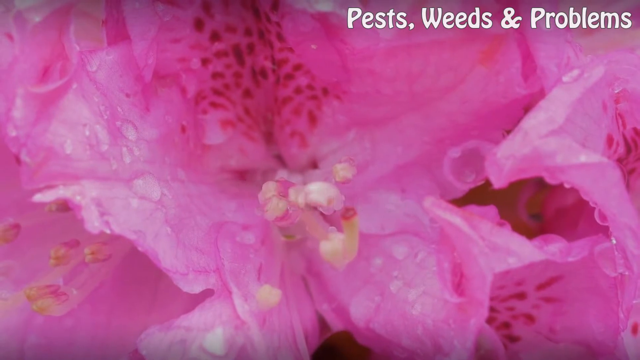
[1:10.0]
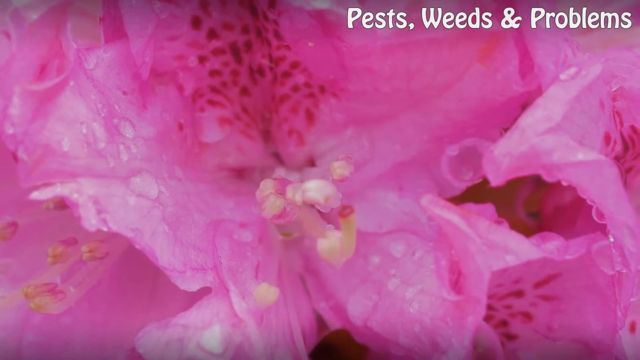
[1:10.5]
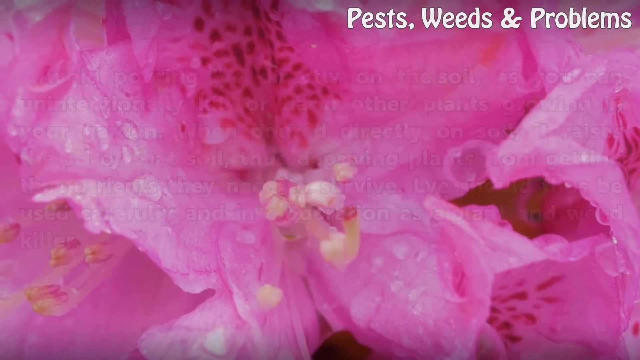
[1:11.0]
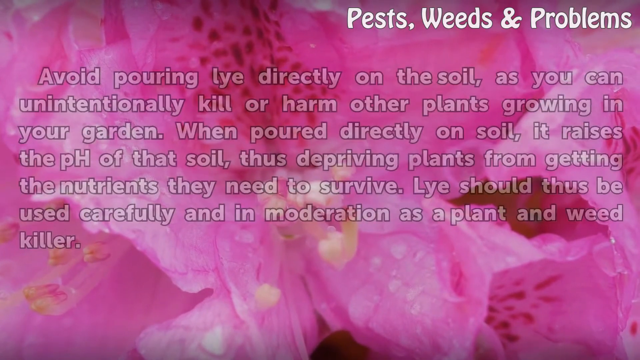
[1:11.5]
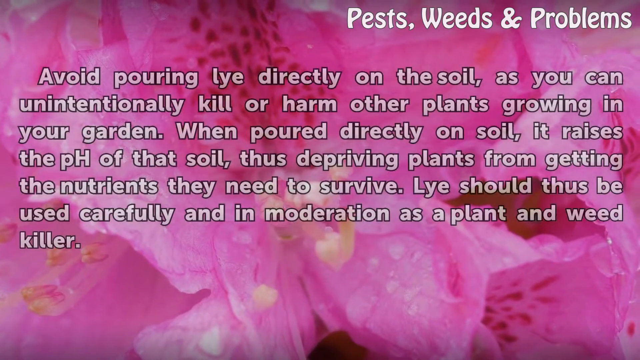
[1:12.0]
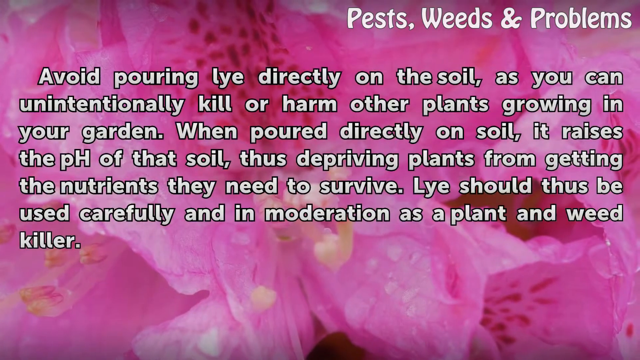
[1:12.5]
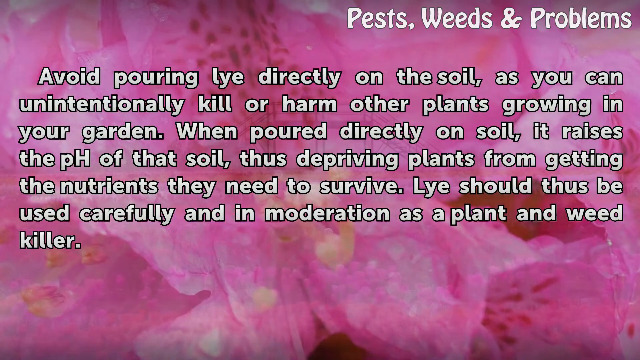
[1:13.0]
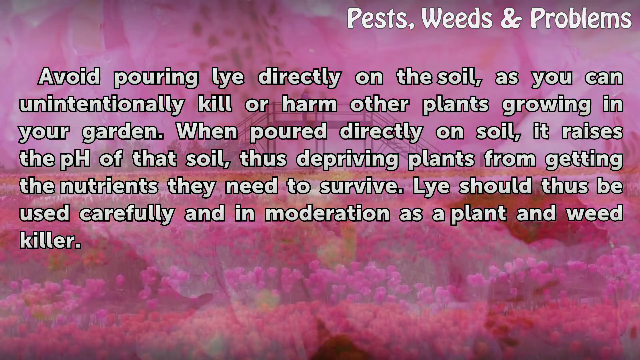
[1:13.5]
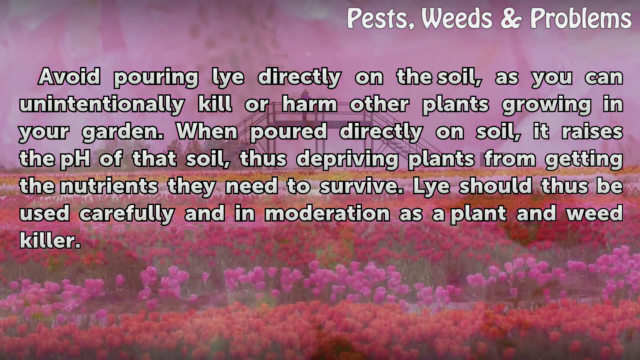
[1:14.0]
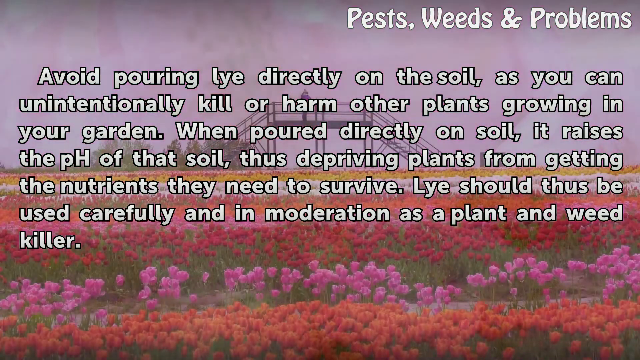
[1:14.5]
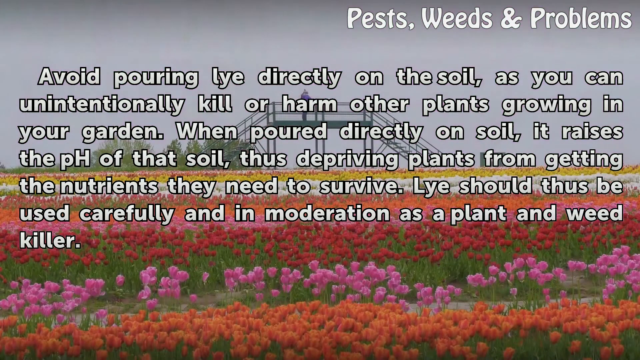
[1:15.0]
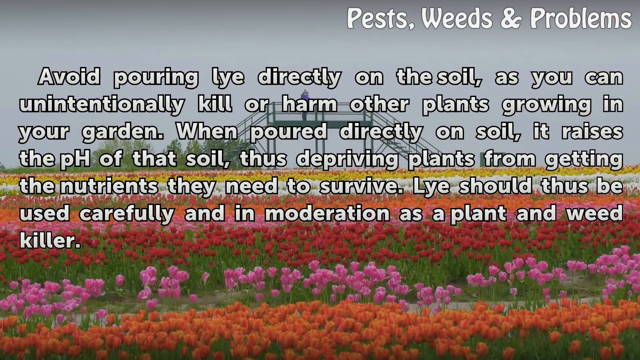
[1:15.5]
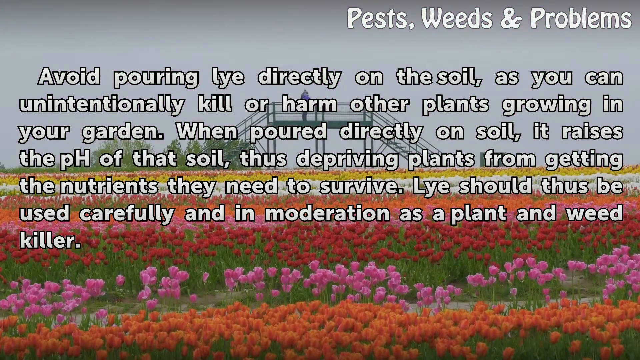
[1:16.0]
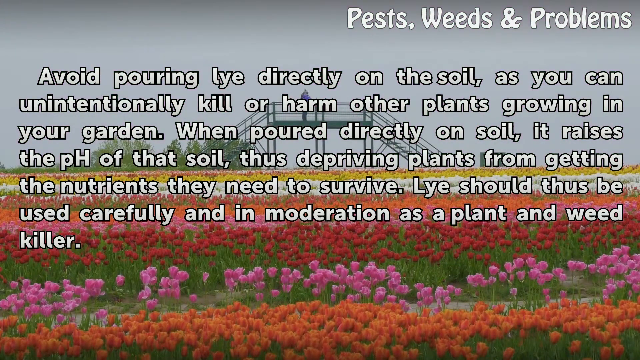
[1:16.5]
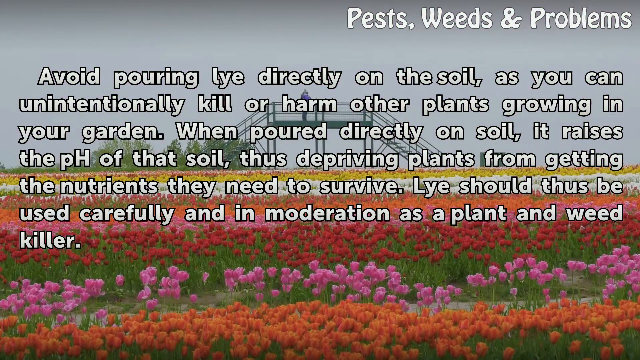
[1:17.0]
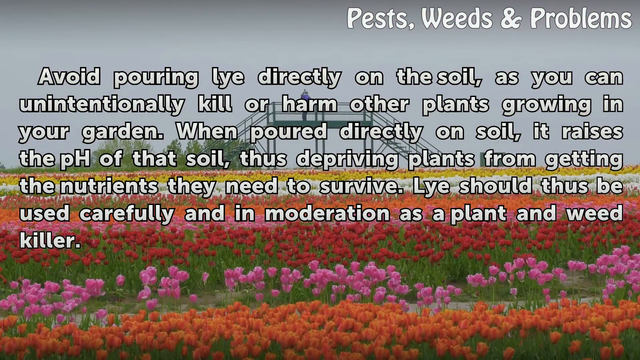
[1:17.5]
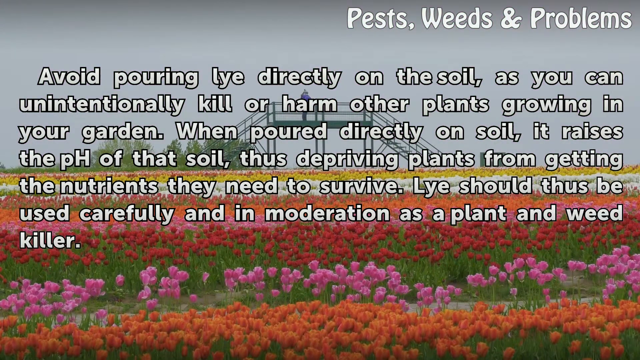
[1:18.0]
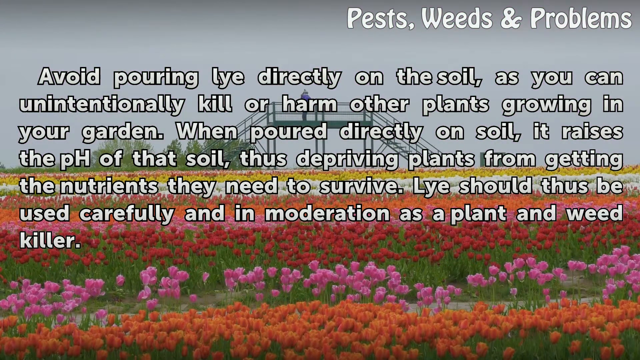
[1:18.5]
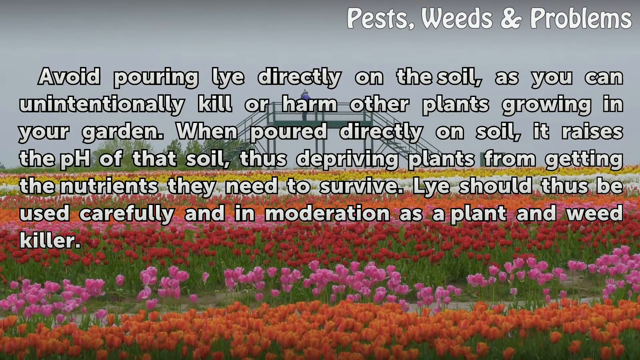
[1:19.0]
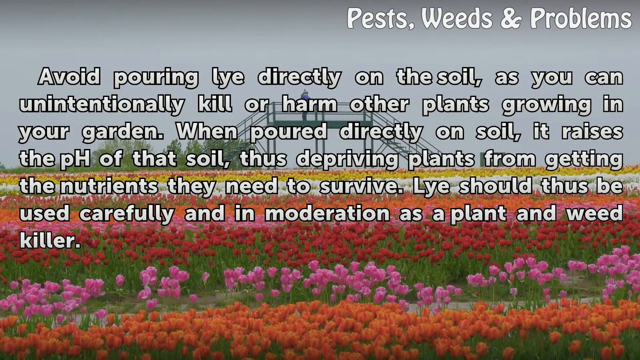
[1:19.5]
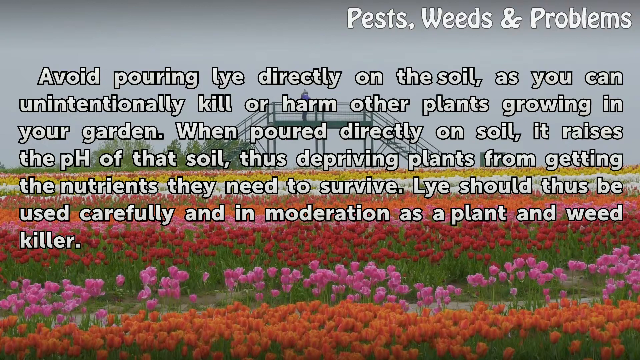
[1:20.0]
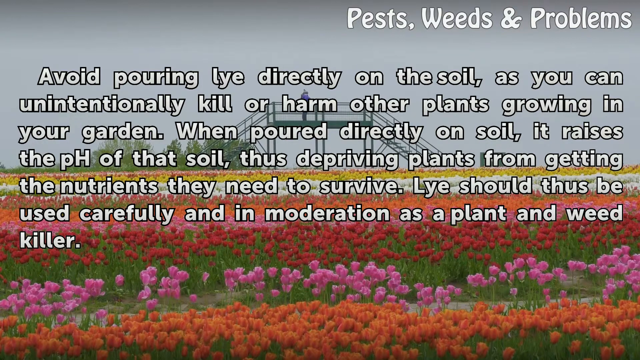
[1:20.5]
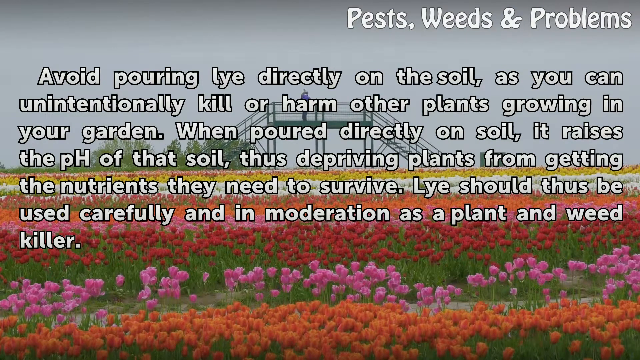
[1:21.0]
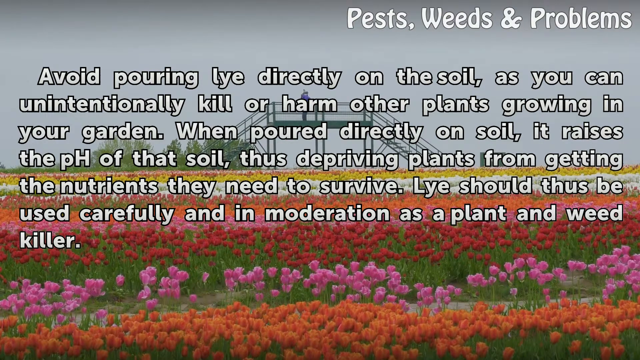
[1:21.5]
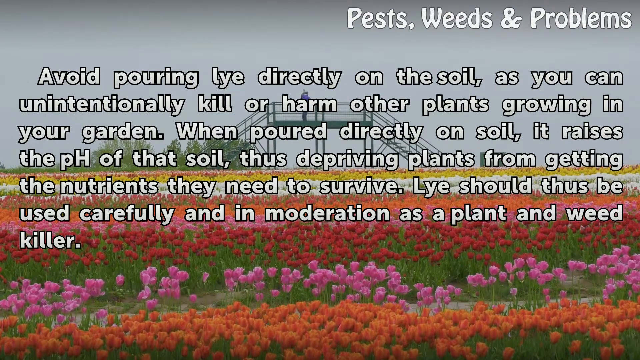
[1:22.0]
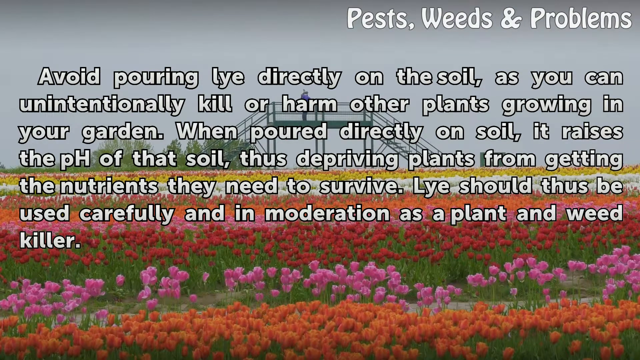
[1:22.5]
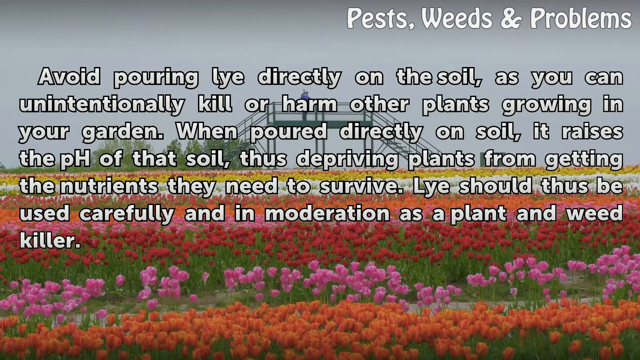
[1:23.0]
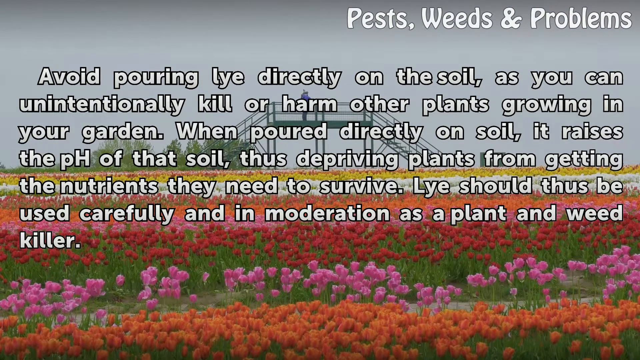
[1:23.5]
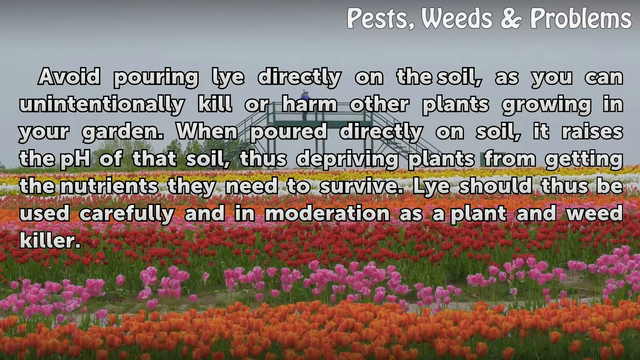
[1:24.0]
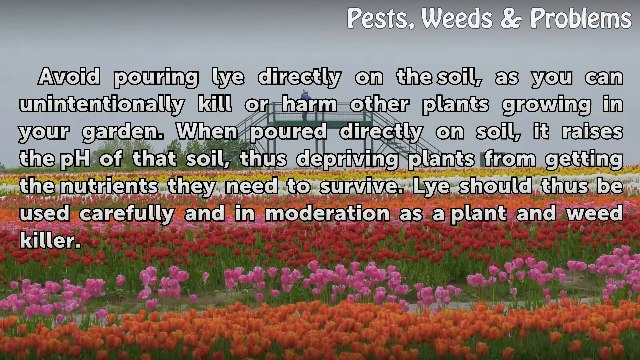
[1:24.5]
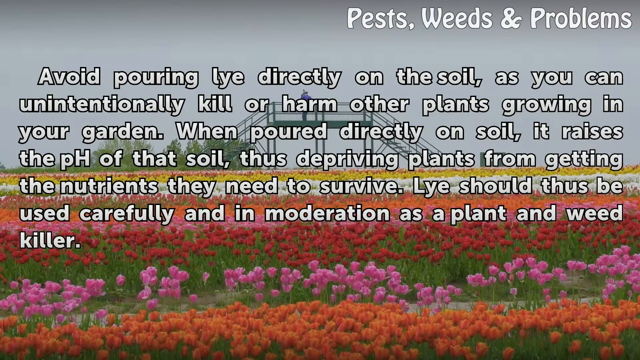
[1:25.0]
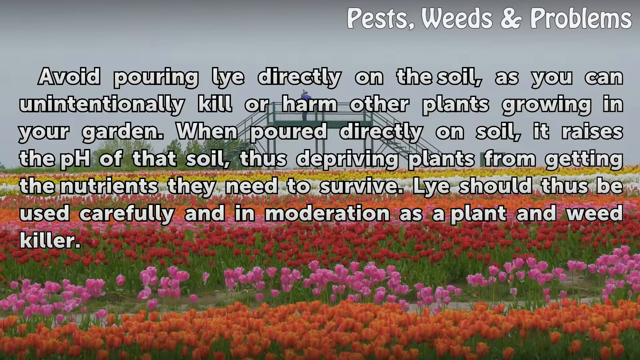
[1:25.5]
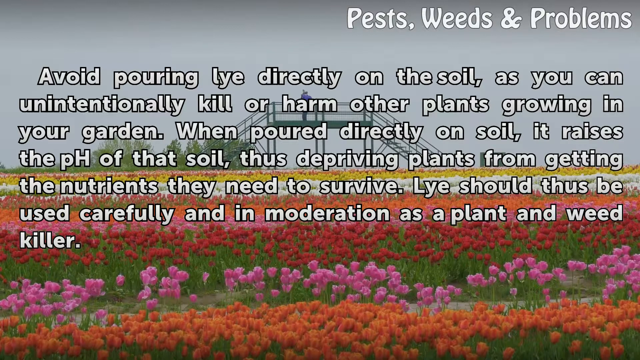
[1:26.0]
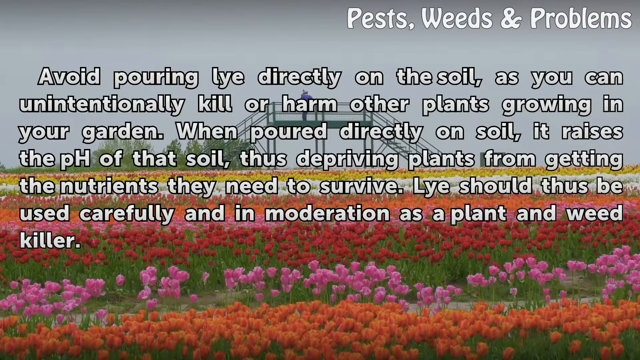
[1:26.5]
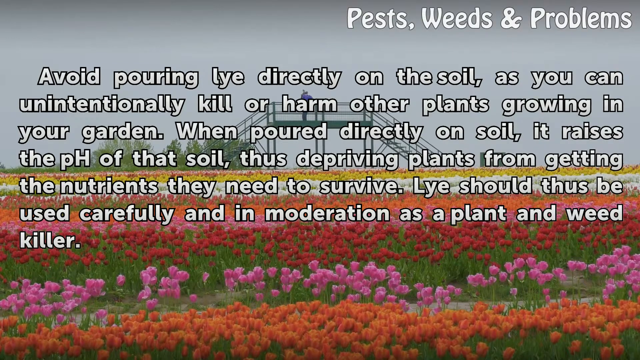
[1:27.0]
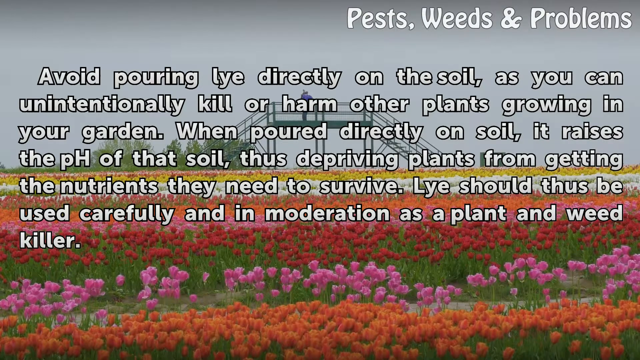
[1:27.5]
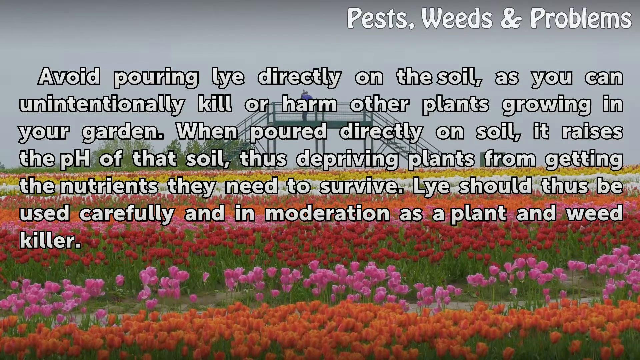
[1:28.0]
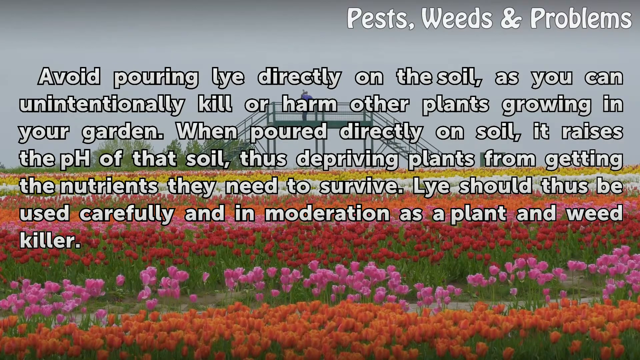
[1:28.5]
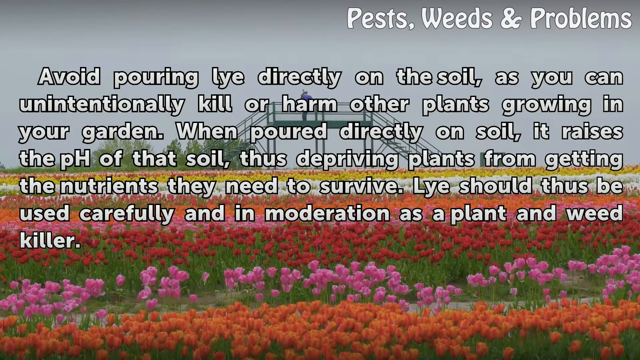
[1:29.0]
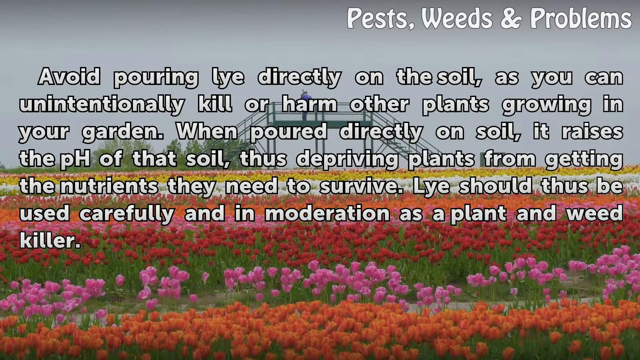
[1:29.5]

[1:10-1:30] The same zoomed-in pink flower background shakes slightly from left to right as body text fades onto the screen, reading "Avoid pouring lye directly on soil, as you can unintentionally kill or harm other plants growing in your garden. When poured directly on soil, it raises the pH of that soil, thus depriving plants from getting the nutrients they need to survive. Lye should thus be used carefully and in moderation as a plant and weed killer." While this text is on screen, the background changes to rows of different flowers in an expansive field, with a platform in the background and a gray sky on the horizon. The rows are separated by color; from the bottom of the image to the top they are orange, pink, red, pink, then orange, red, white, yellow and red again, before the trees and horizon are visible.